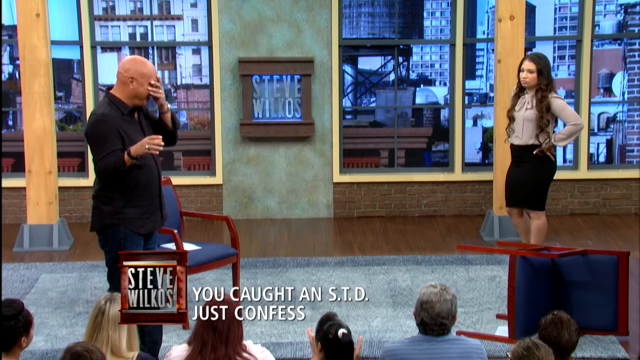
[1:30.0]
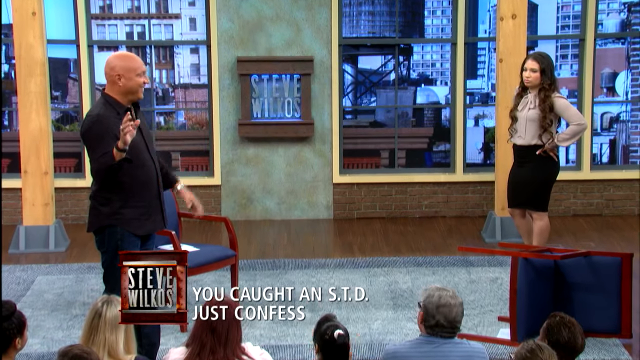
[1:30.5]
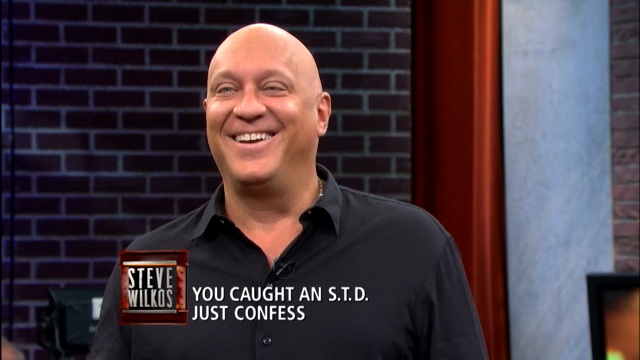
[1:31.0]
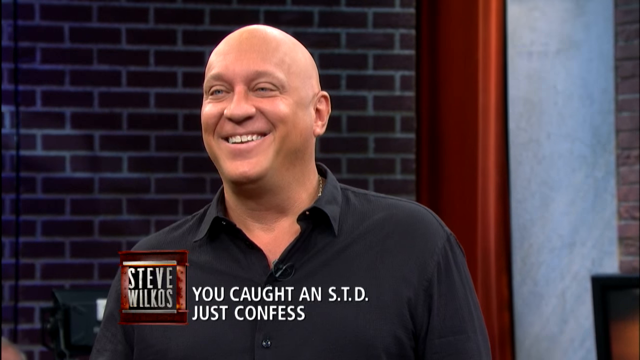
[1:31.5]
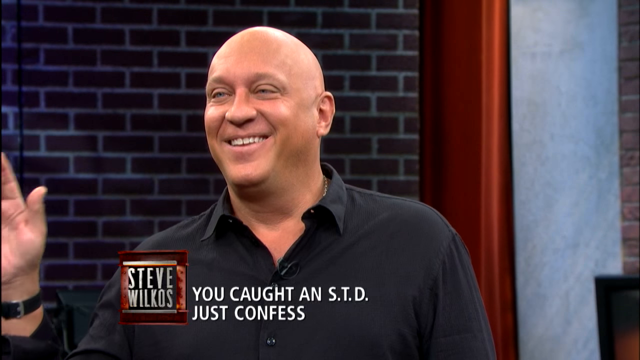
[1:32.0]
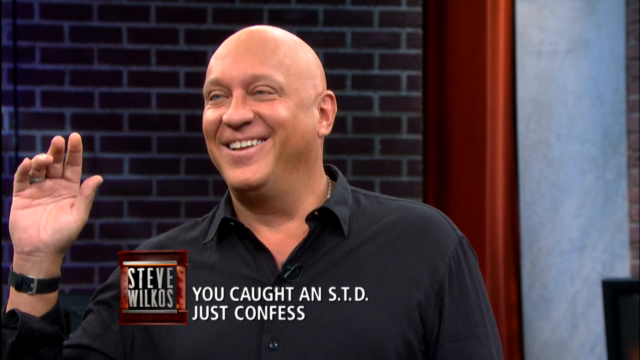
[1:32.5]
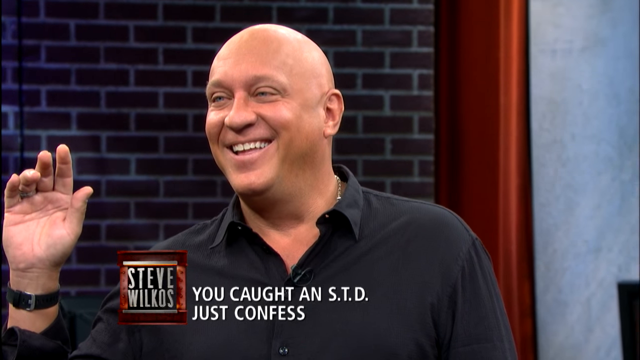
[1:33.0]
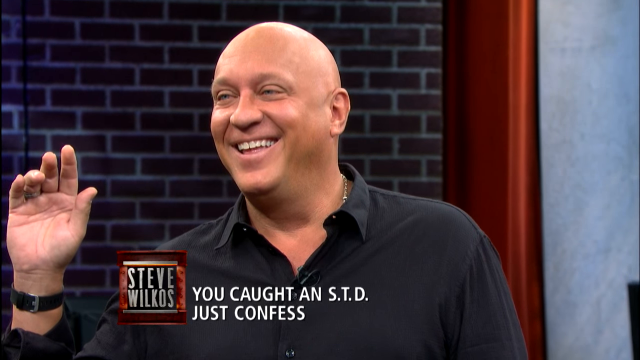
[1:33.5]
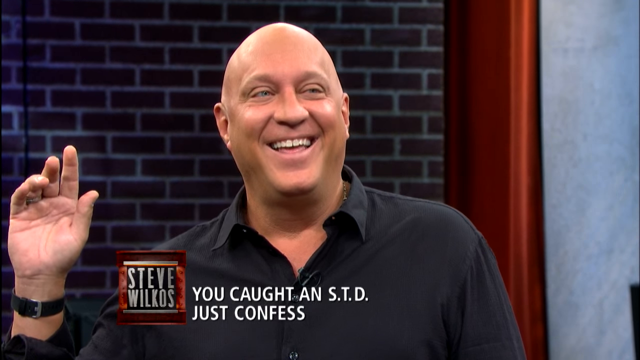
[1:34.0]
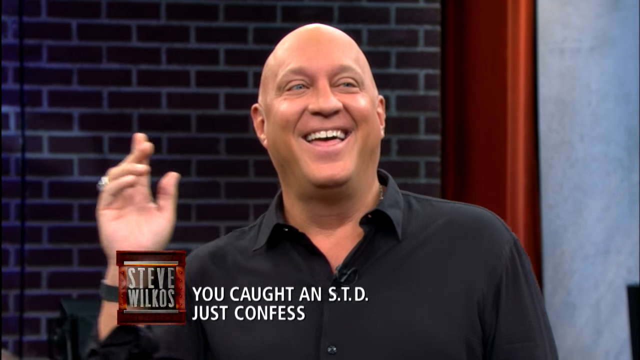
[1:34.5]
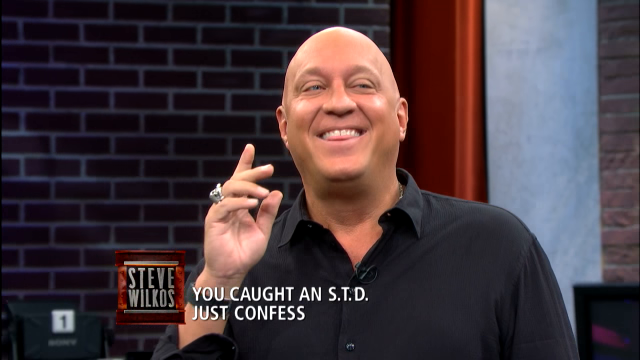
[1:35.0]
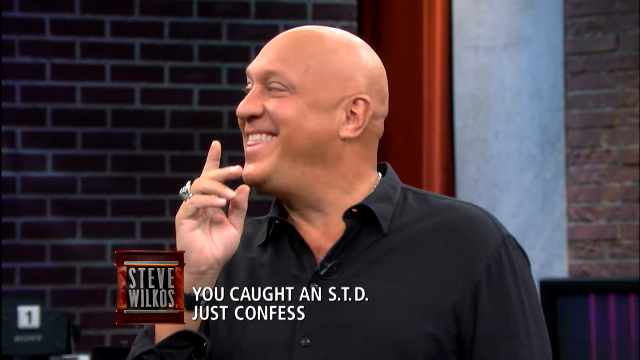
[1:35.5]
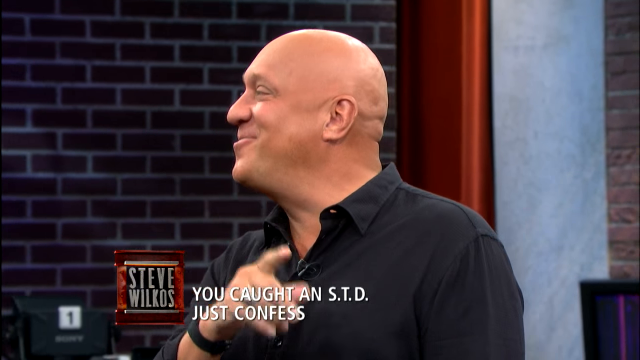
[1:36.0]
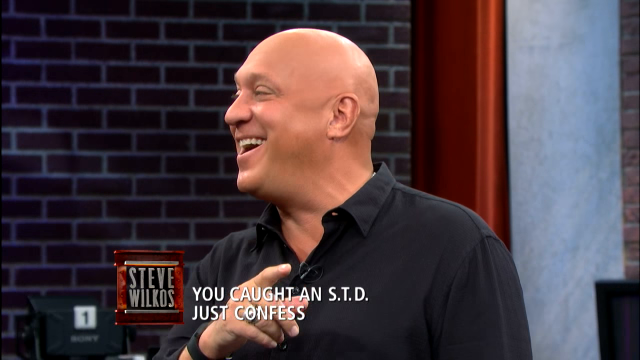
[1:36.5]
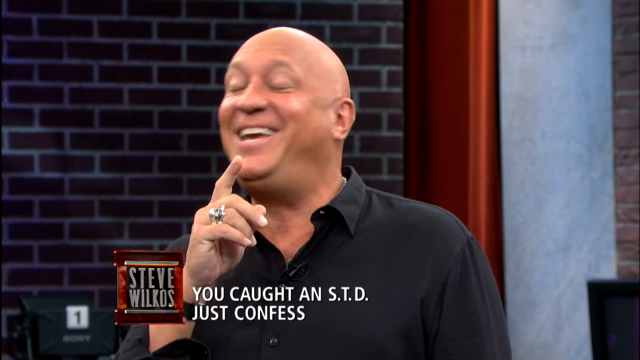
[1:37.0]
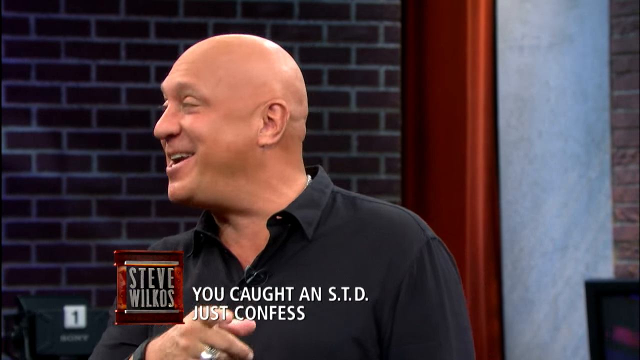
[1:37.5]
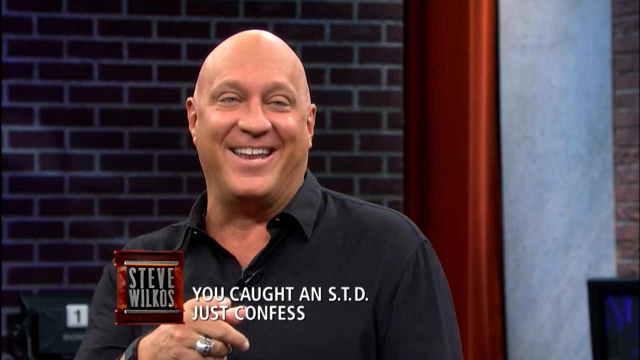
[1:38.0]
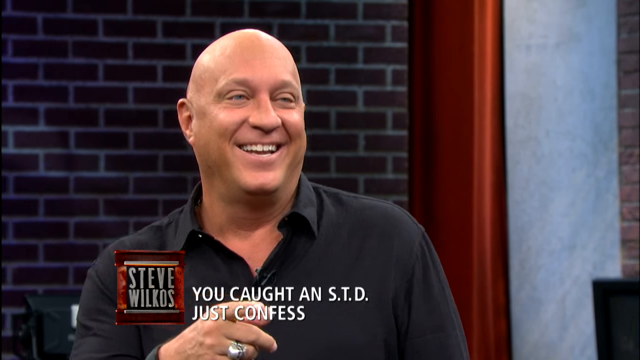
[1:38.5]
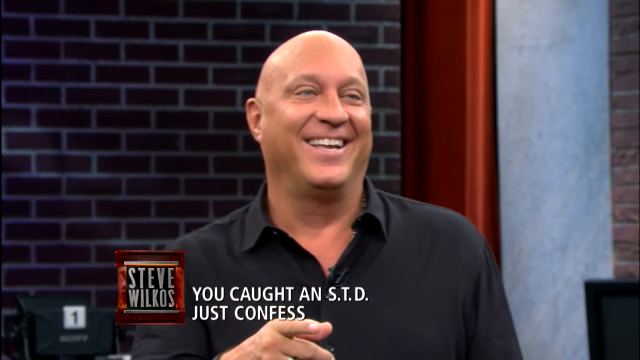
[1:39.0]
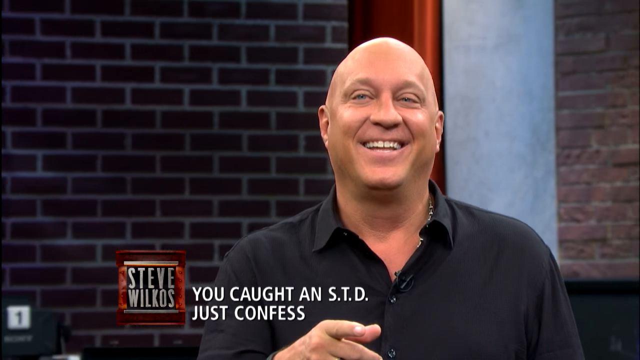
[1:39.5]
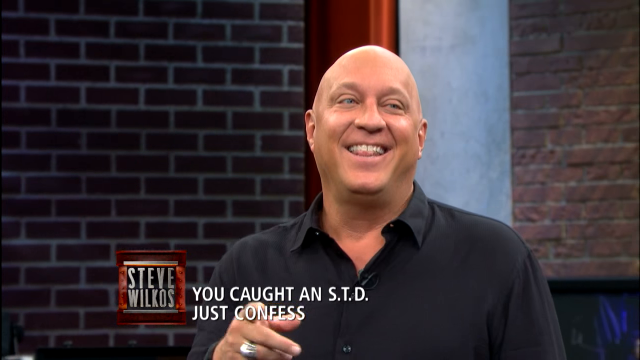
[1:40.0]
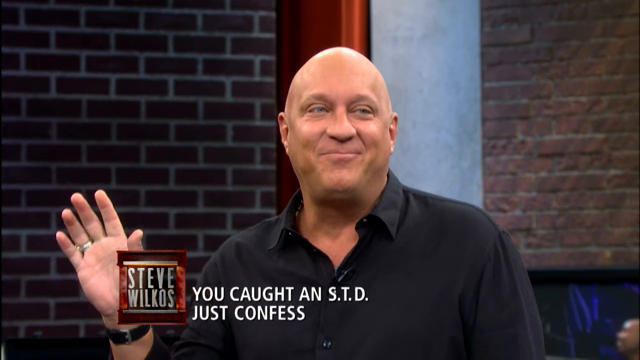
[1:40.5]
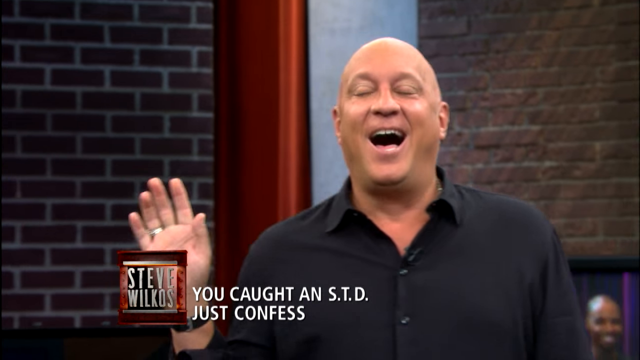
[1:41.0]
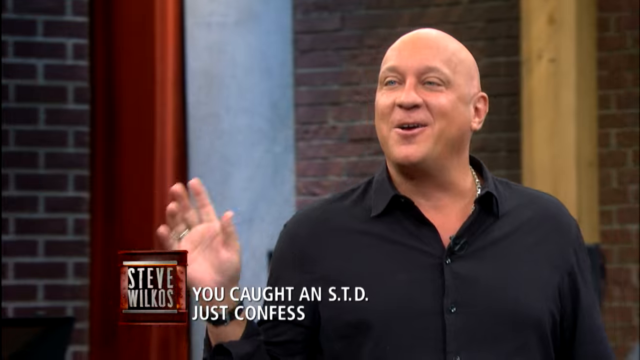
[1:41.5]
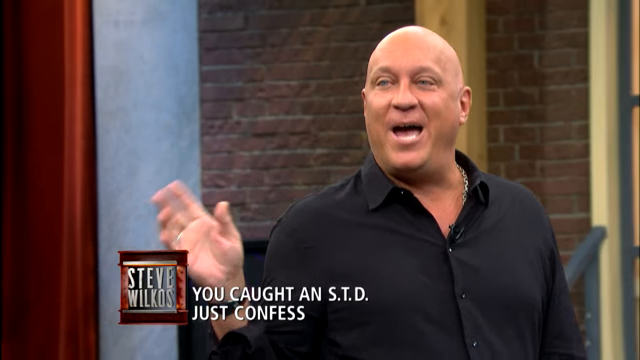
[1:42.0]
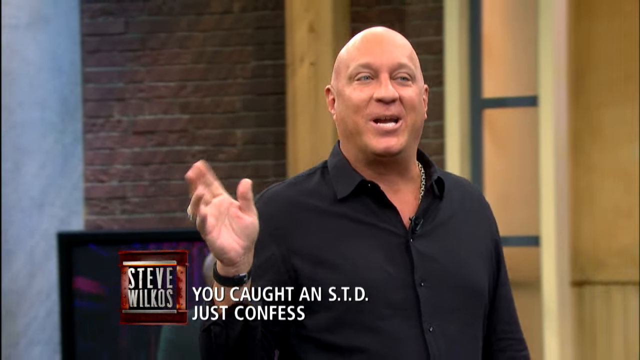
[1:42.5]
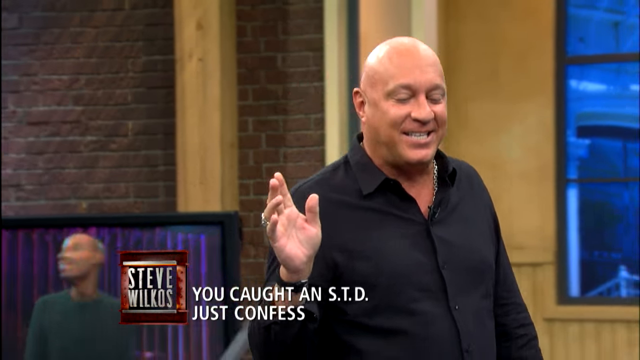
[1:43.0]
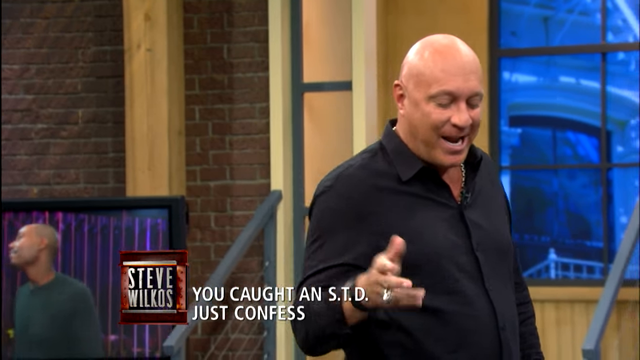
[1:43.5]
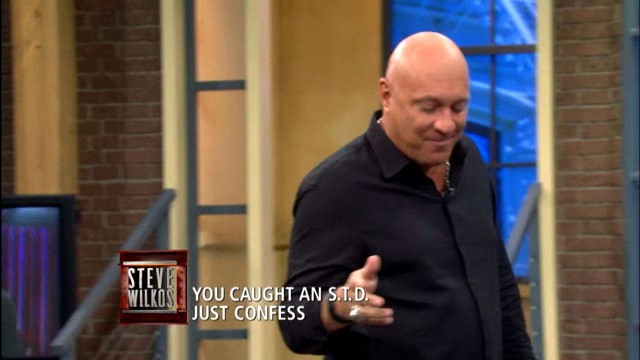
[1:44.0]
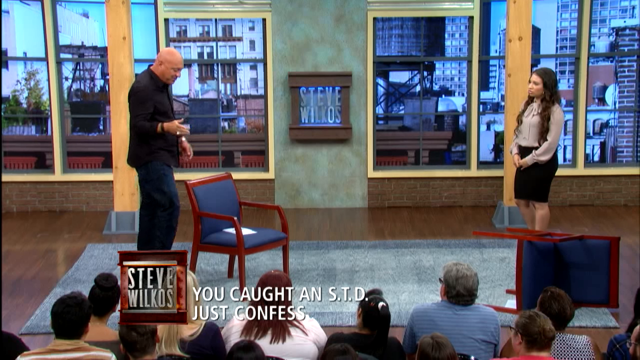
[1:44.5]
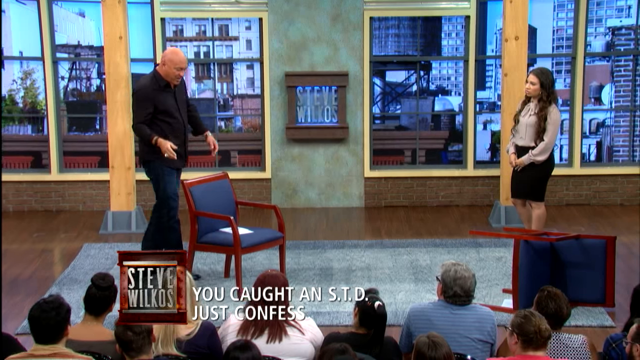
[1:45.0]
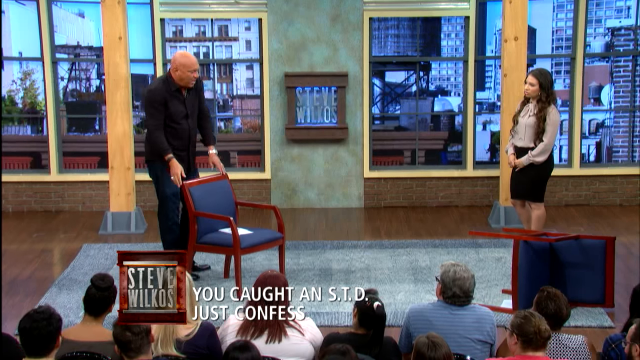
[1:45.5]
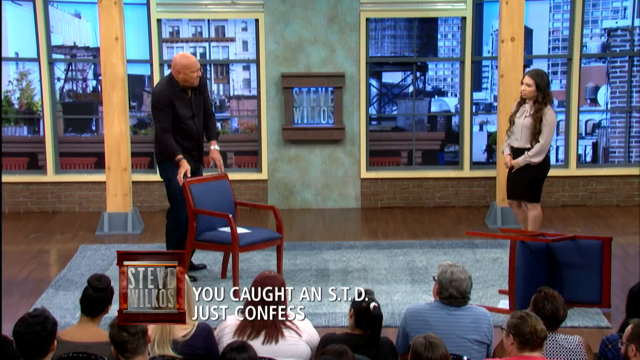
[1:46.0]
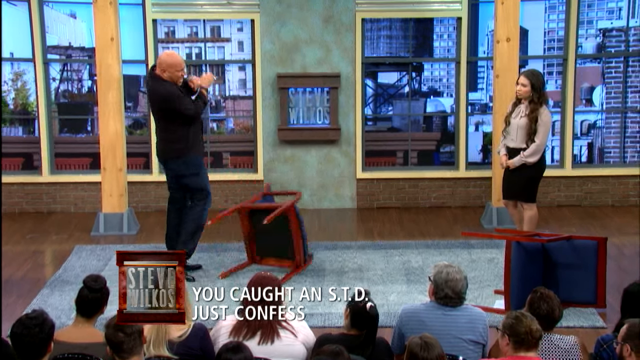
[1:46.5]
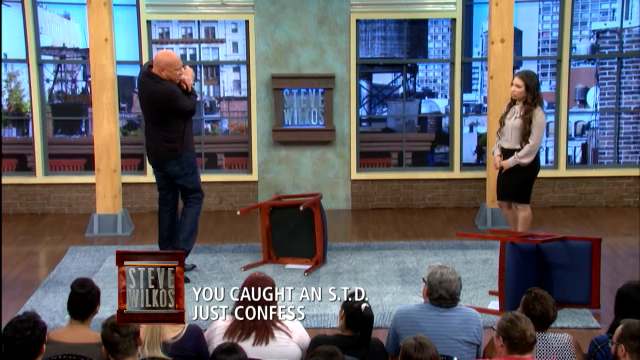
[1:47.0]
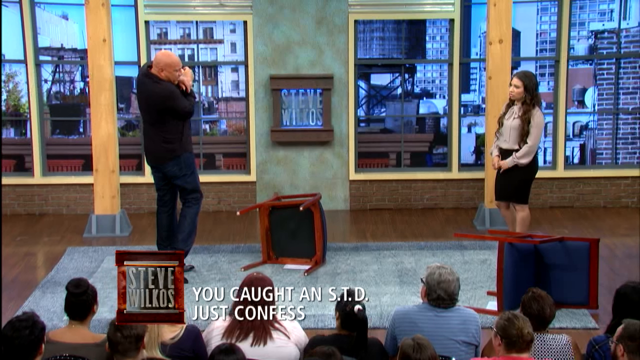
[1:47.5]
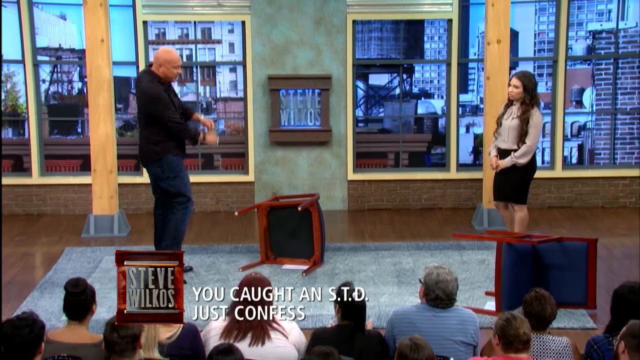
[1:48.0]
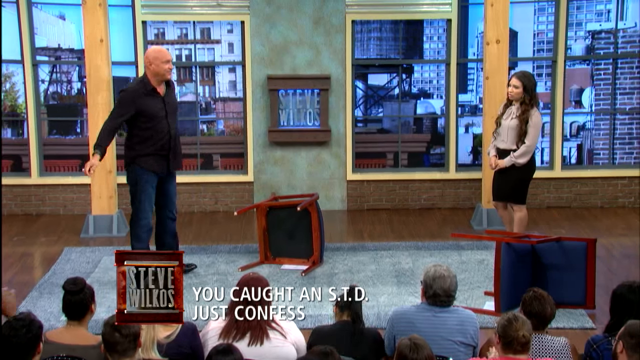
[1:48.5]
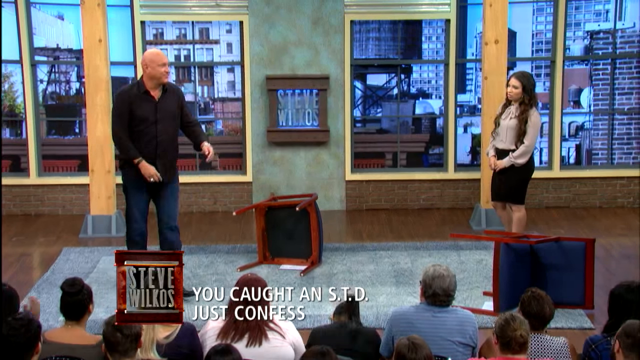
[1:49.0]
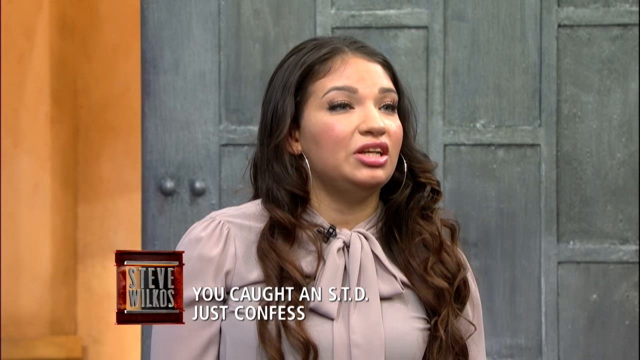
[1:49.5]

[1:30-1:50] The camera comes in for a close-up of the host's face, showing a dark-looking brick wall behind him. He is still laughing hard and uses his left hand to point for emphasis while commenting on the incident, smiling the whole time. He begins to move toward the right, and the shot goes wide again, showing him behind the other chair on the left side. He takes it and somewhat gently knocks it over with an exaggerated, golf-swing-like motion of his hips. The video then shows the young woman saying something about it, still looking very serious. Just to her left there is a small flash of movement: the young man is about to come back on stage from where he left.